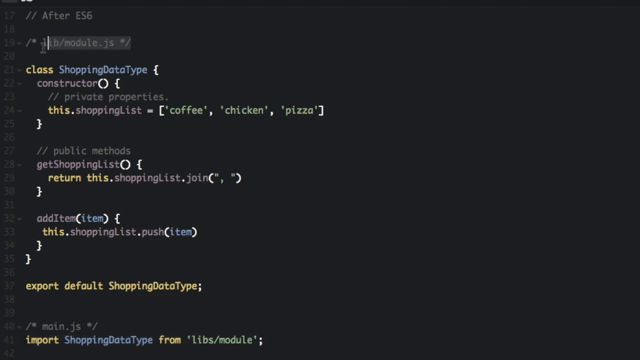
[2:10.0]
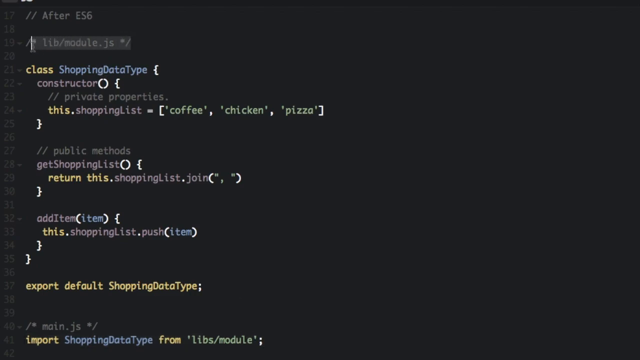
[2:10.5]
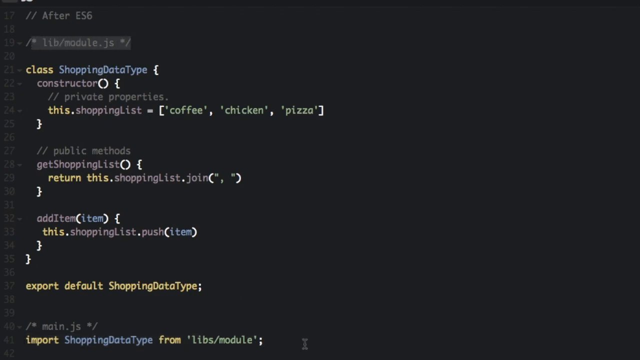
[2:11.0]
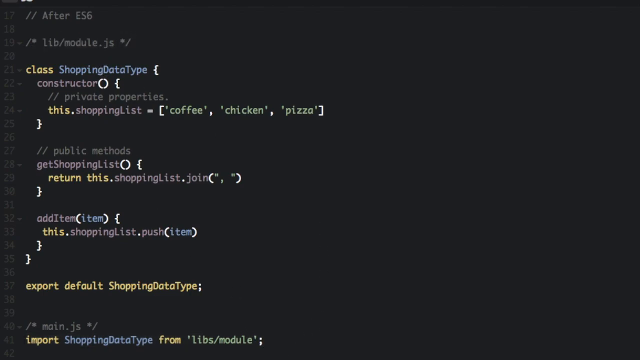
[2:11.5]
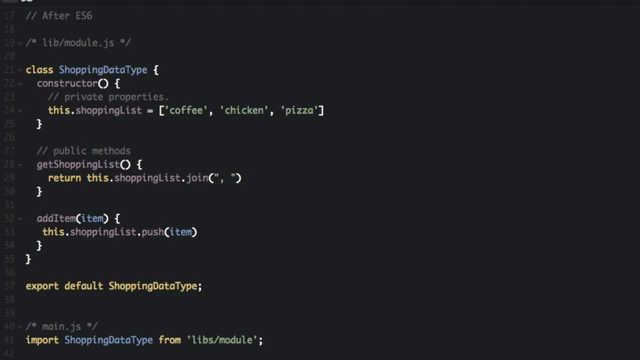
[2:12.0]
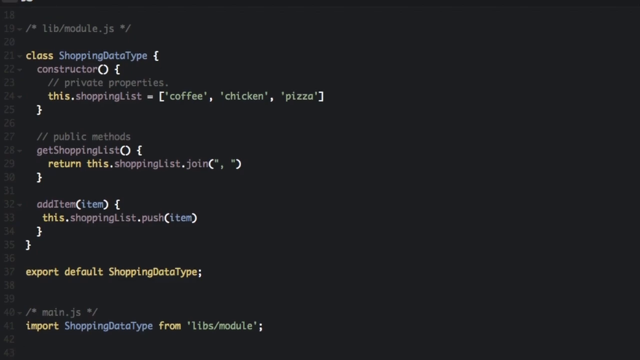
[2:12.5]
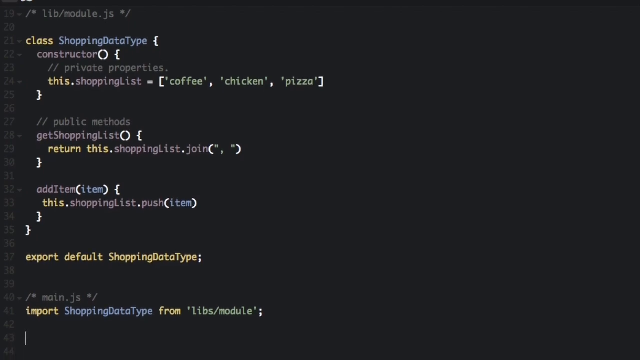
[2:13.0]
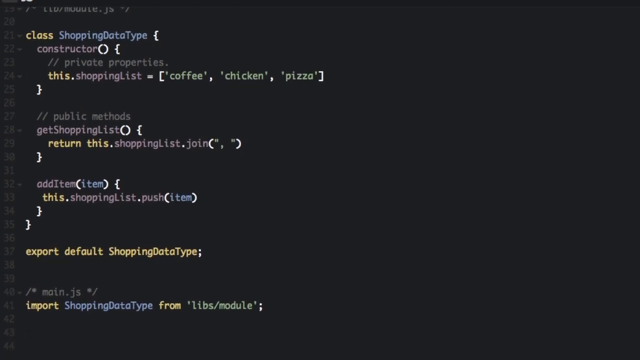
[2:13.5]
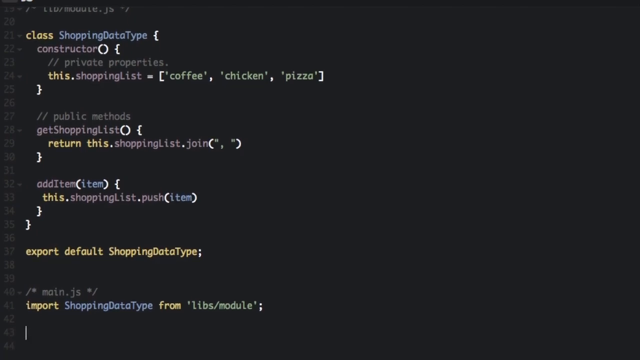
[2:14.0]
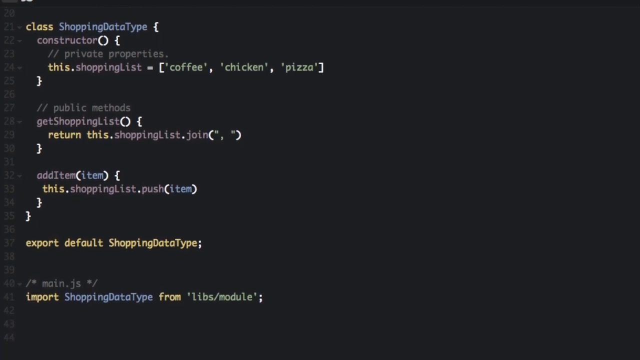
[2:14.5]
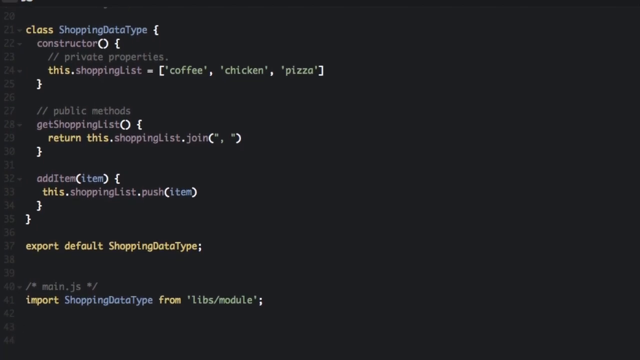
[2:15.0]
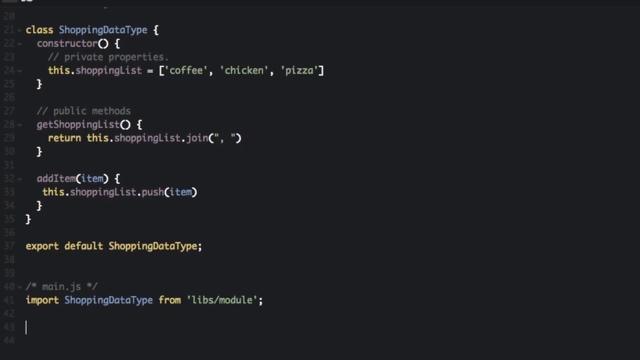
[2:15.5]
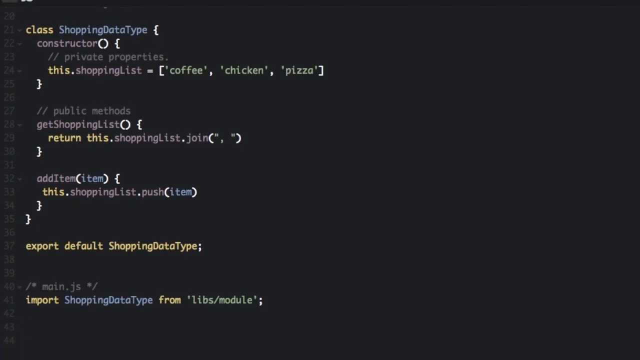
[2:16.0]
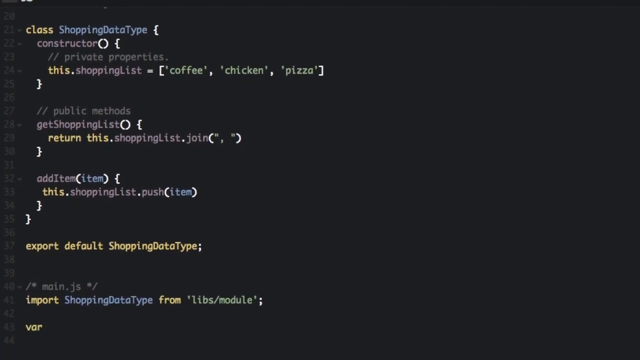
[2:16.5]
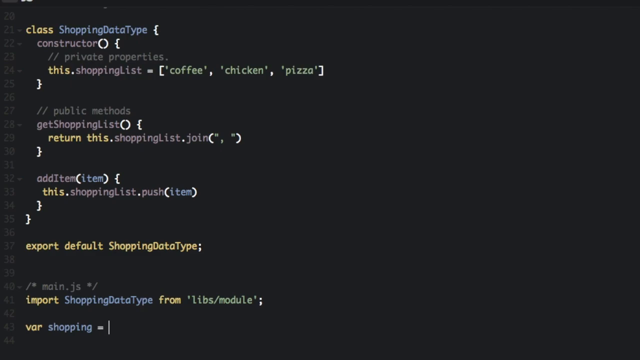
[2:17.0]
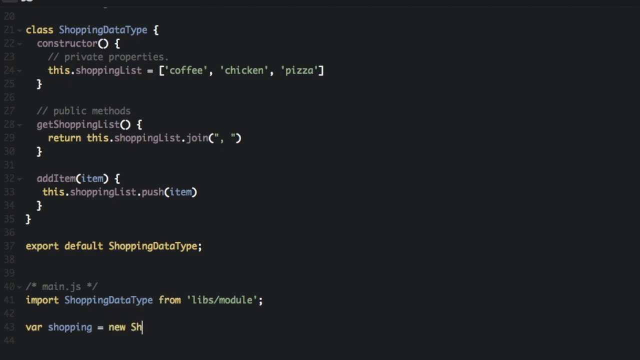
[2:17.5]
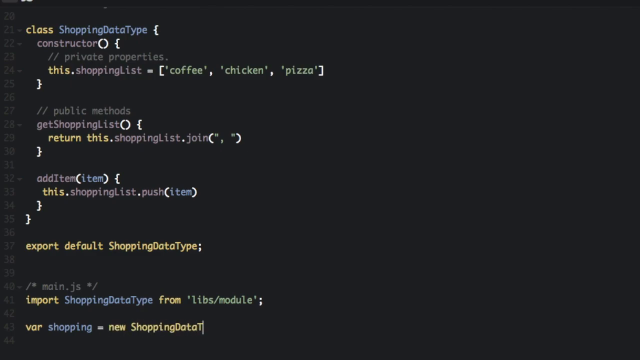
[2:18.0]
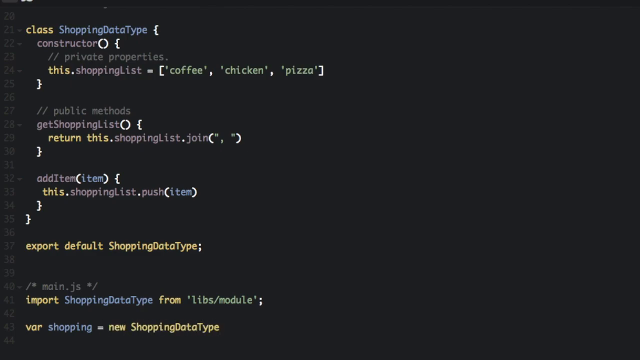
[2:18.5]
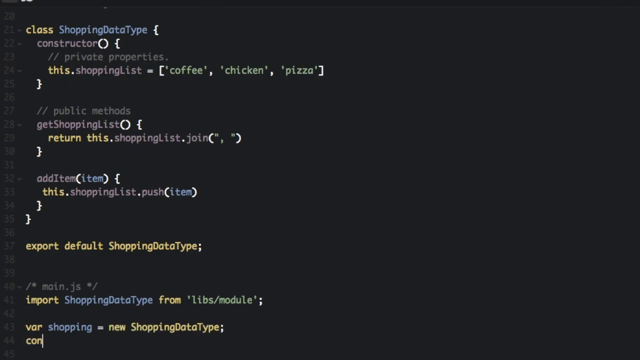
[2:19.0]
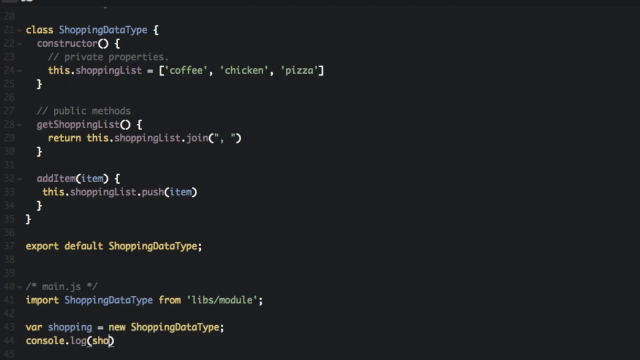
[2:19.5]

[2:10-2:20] Line 32 has "addItem" in a brownish gray font with the I capitalized, followed by an open white parenthesis and the word "item" again, this time with a lowercase i, in light blue or bluish gray. Then come a closed white parenthesis, a space and an open white bracket. Line 33 has a space and then "this.shoppingList.push(item)": "this" is yellow, the dots are white, "shoppingList" is brownish gray with the L capitalized, "push" is also brownish gray, "item" inside the parentheses is light blue or bluish gray, and all the other non-letter symbols are white. Line 34 has a closed white bracket after a space or two, and line 35 immediately has a white closed bracket. Line 37 reads "export default ShoppingDataType", with the last three words bunched together, followed by a white semicolon.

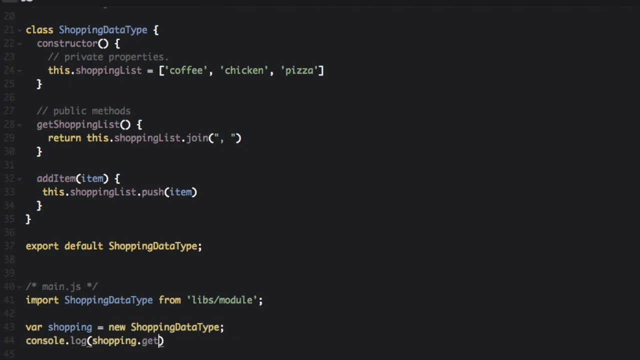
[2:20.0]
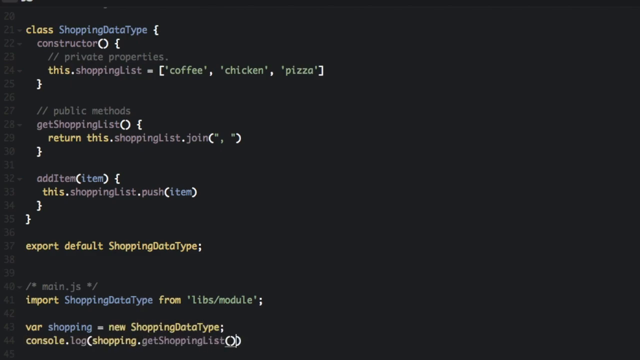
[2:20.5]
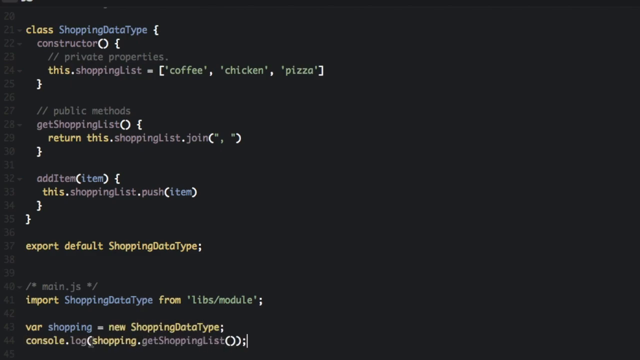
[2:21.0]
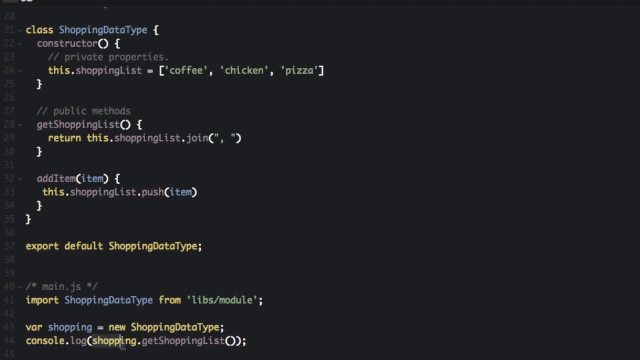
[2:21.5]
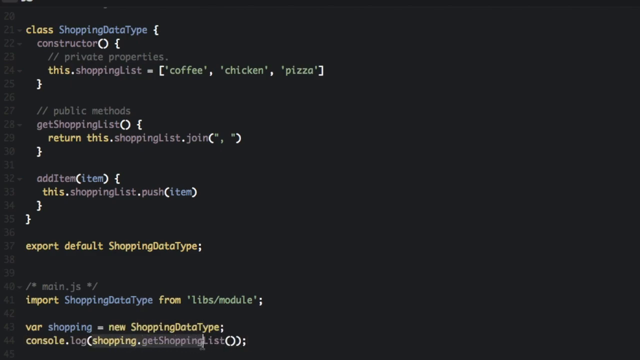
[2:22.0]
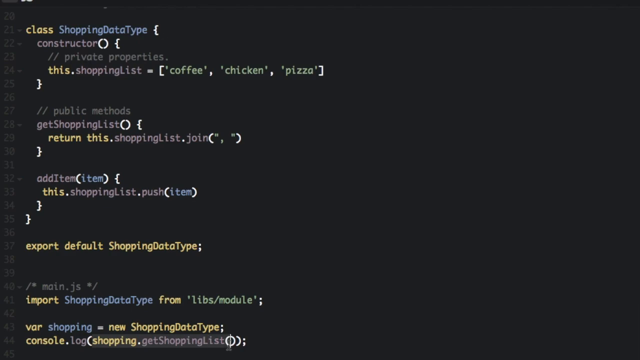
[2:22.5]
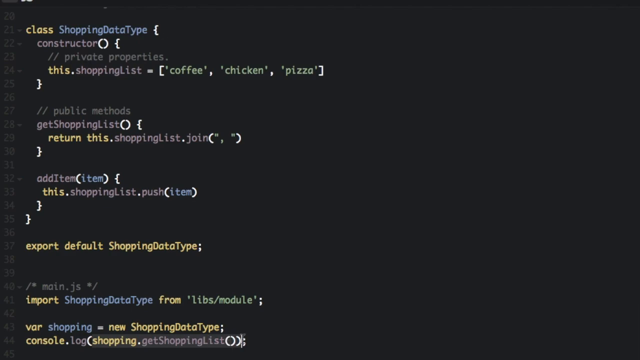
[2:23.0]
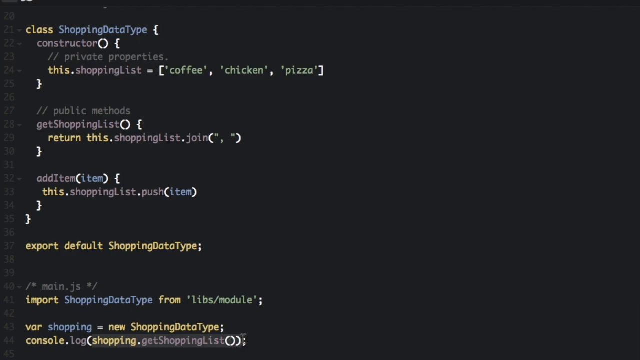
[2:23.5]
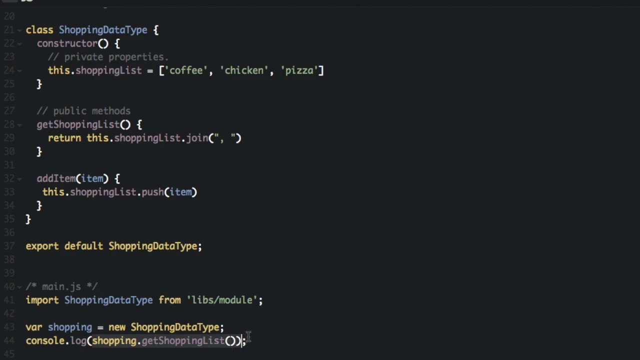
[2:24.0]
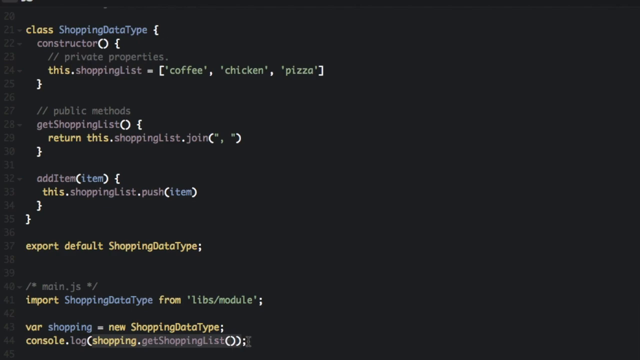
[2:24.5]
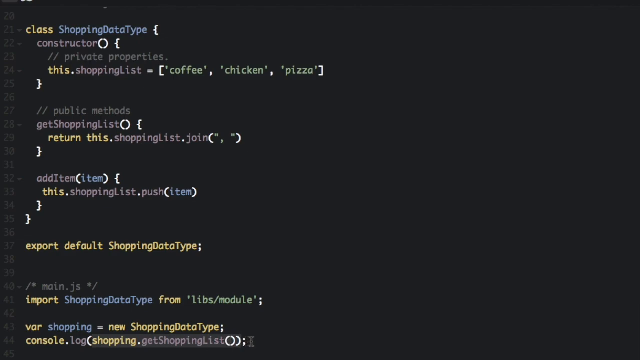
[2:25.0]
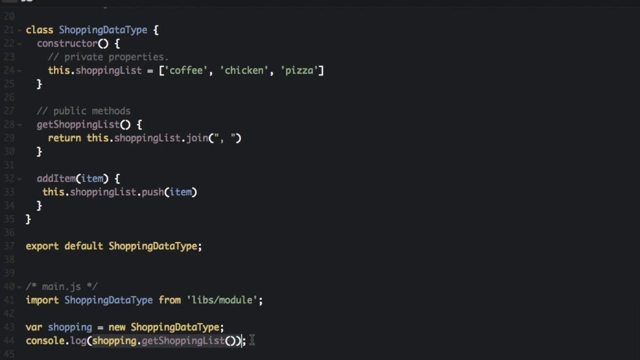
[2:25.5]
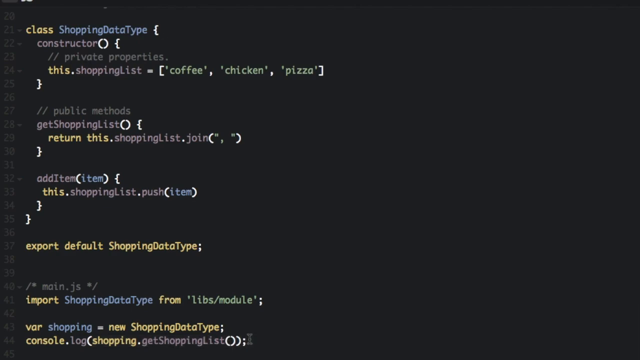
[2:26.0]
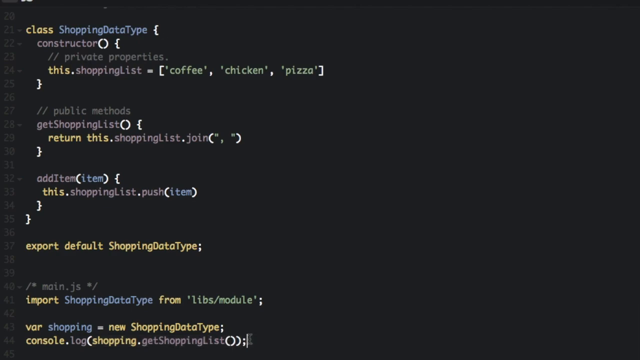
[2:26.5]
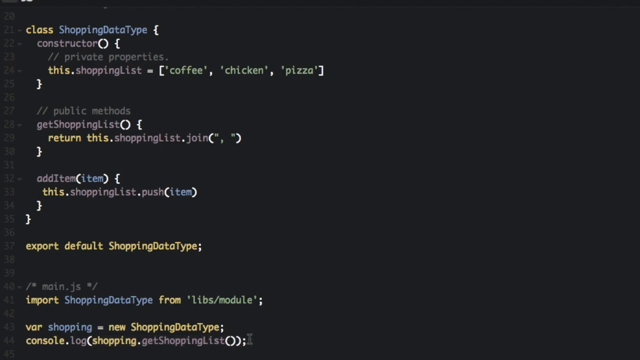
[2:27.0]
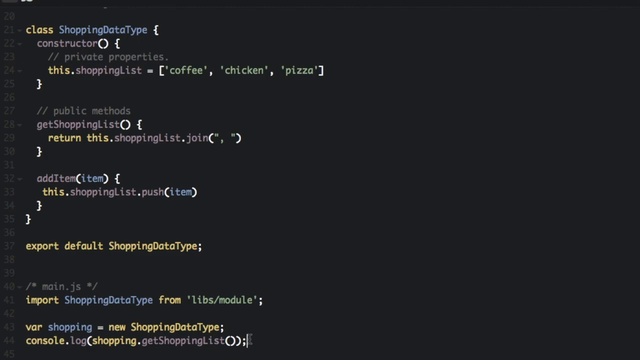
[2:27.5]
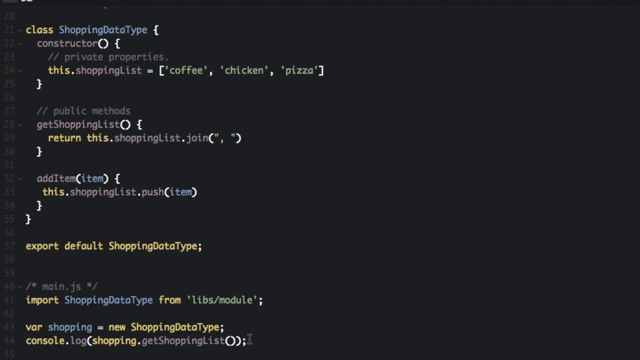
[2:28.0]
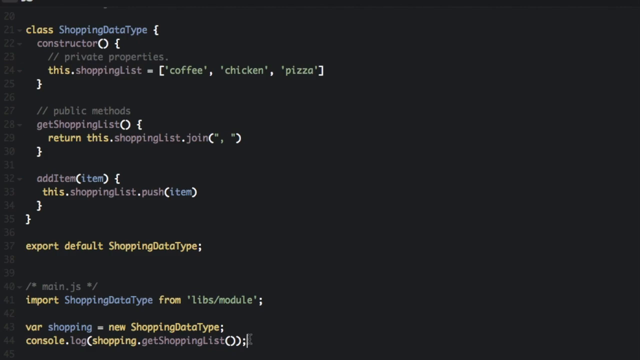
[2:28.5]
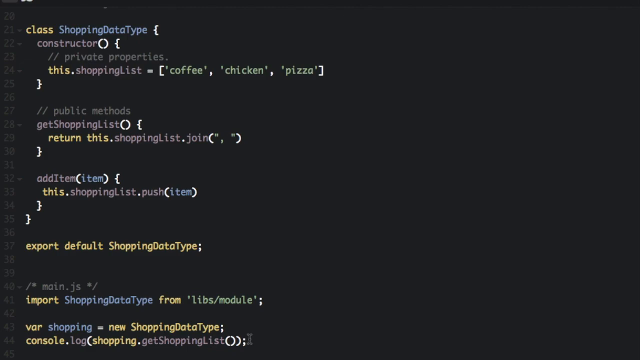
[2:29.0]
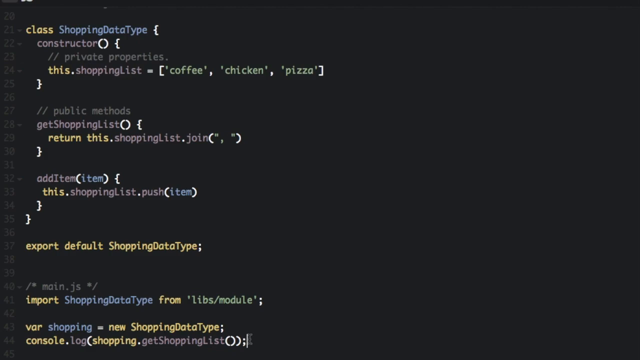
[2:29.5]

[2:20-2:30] Line 40 has a grayed-out triangle directly to the right of its number, very faded, the same color as the line numbers on the left of the recorded screen. After it comes "/* main.js */", all in gray. Directly beneath, line 41 has the word "import" in yellow, a space, "ShoppingDataType" in light blue or bluish gray with a capital S, D and T, a space, "from" in yellow, a space, and then a parenthesis, "libs/module" in green, and a parenthesis, followed by an open parenthesis, really an open colon, and a white semicolon.